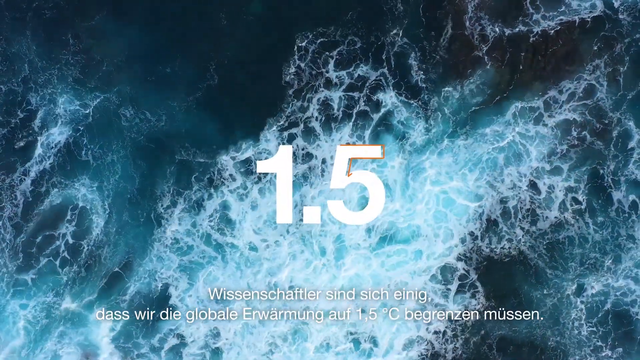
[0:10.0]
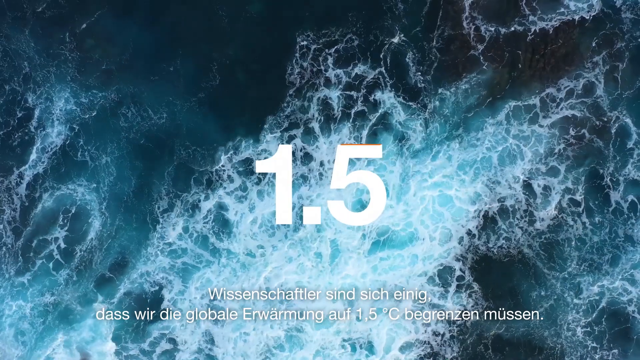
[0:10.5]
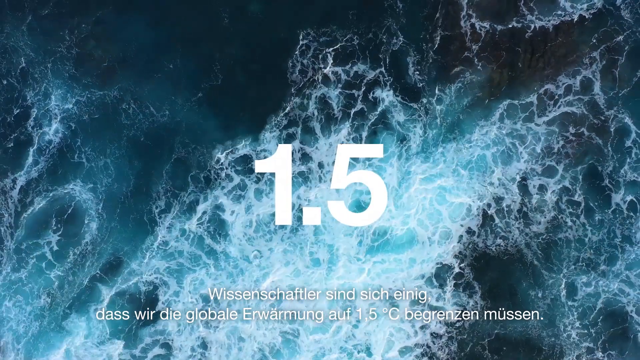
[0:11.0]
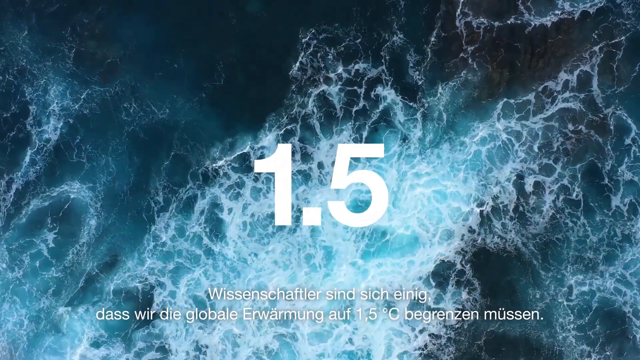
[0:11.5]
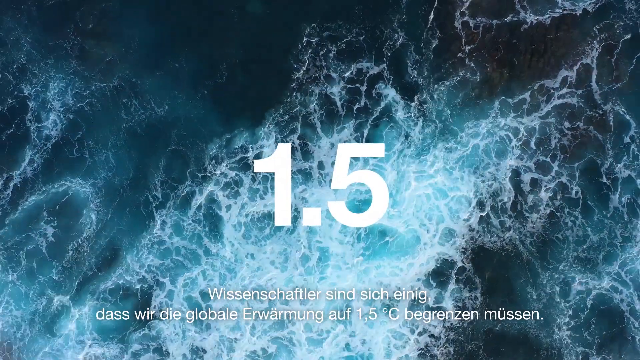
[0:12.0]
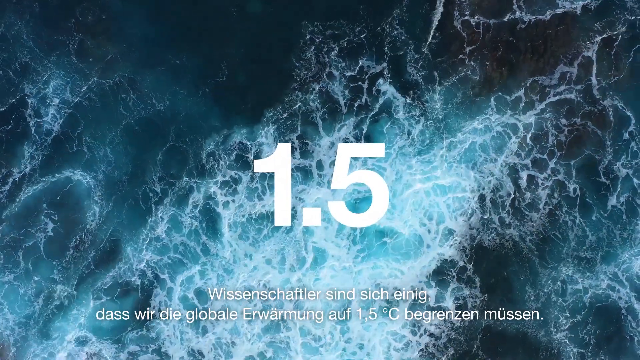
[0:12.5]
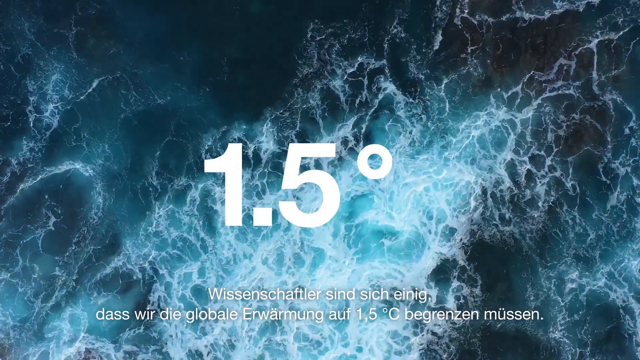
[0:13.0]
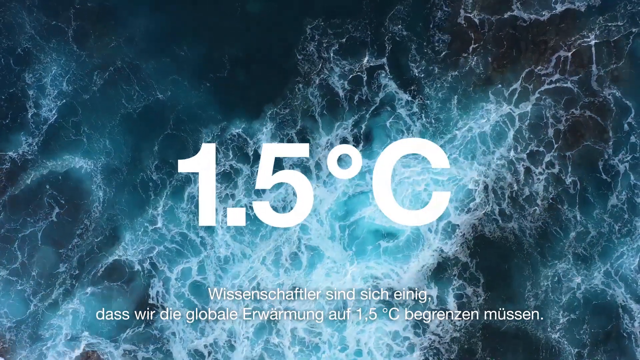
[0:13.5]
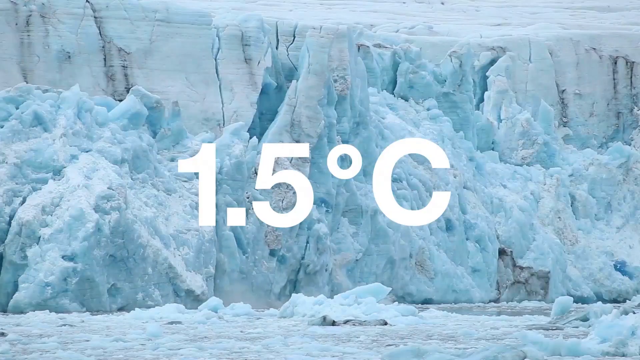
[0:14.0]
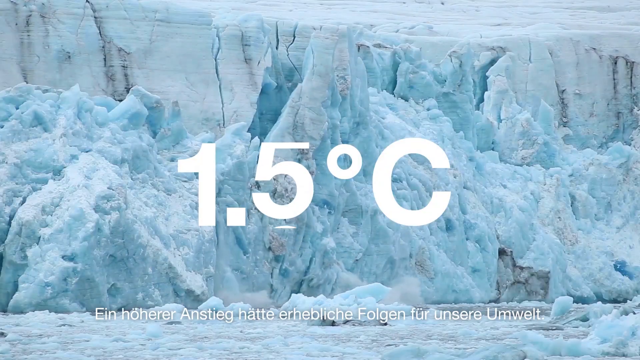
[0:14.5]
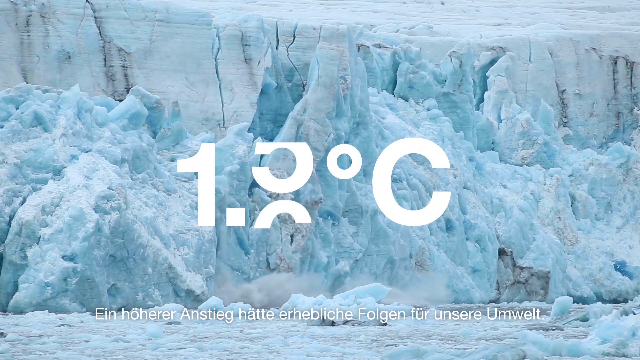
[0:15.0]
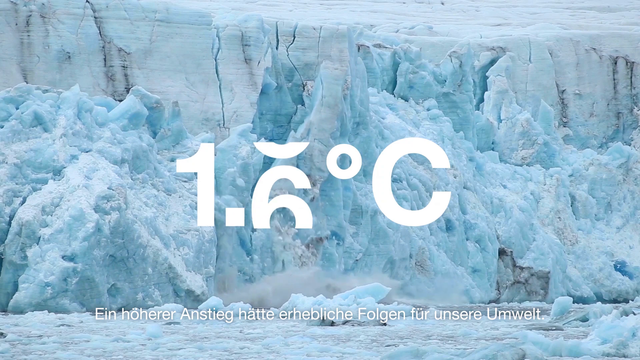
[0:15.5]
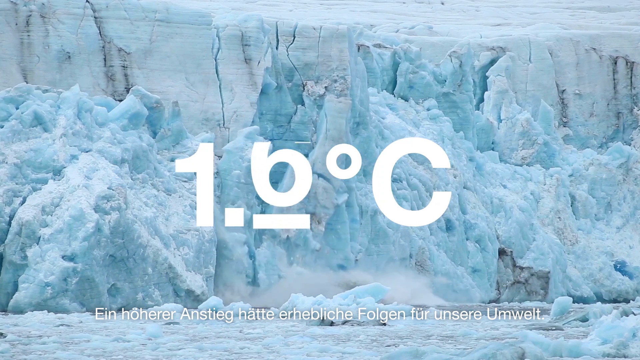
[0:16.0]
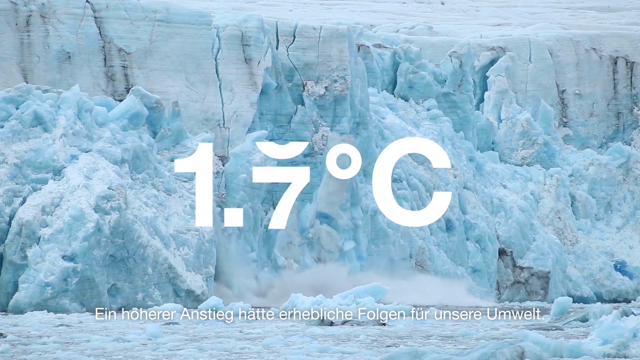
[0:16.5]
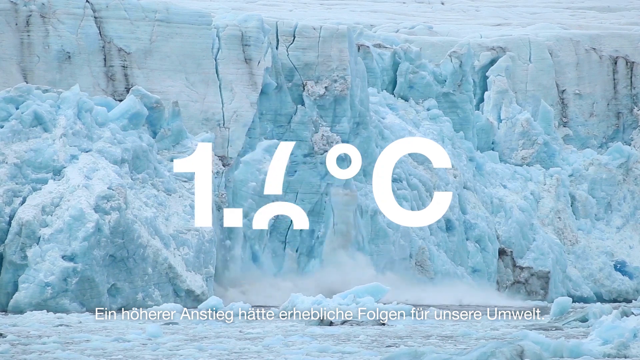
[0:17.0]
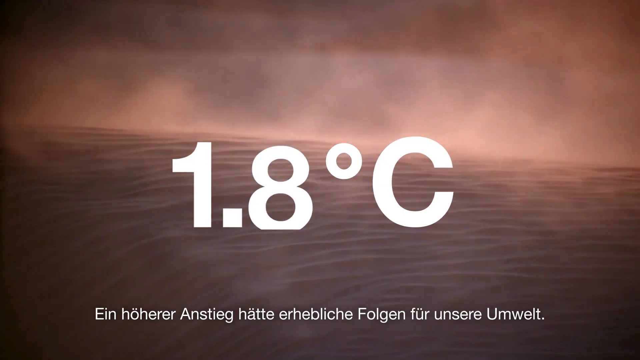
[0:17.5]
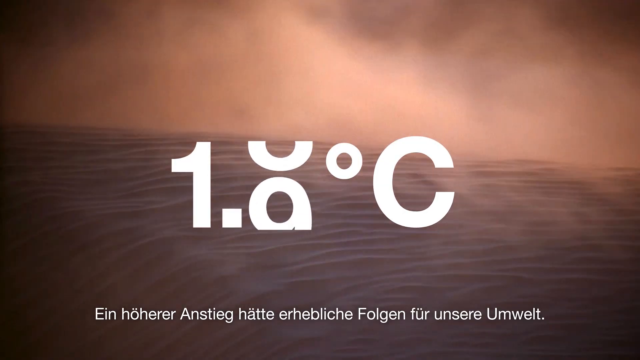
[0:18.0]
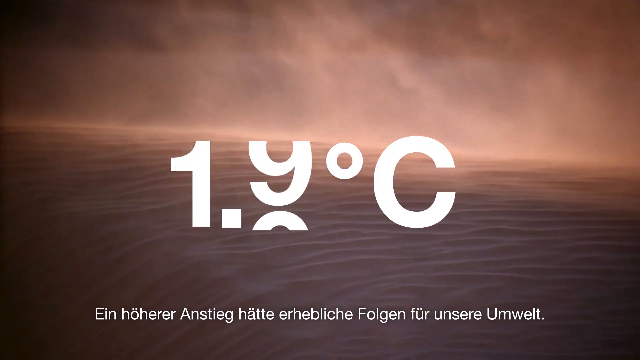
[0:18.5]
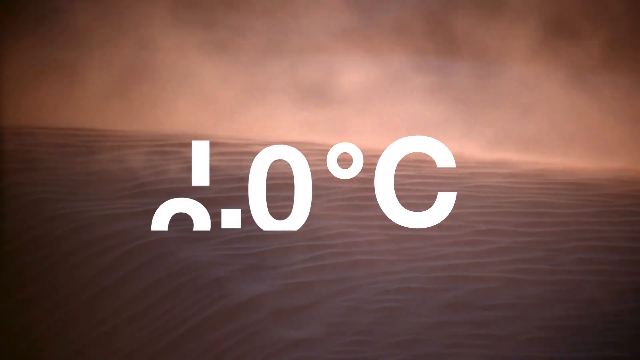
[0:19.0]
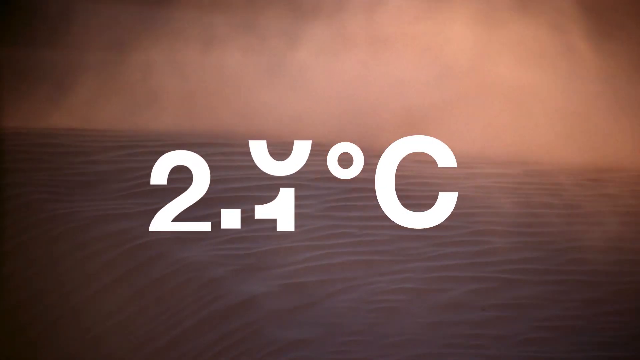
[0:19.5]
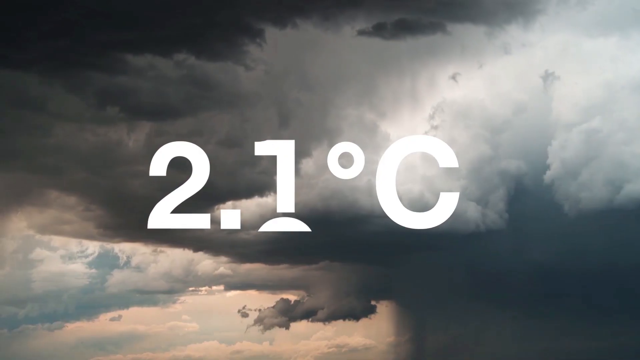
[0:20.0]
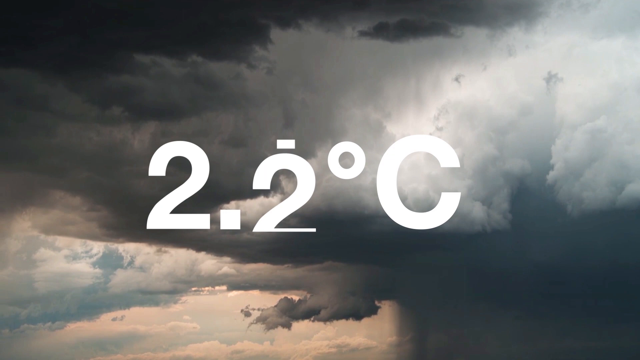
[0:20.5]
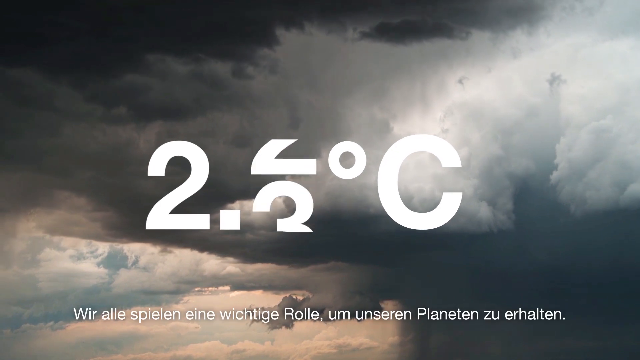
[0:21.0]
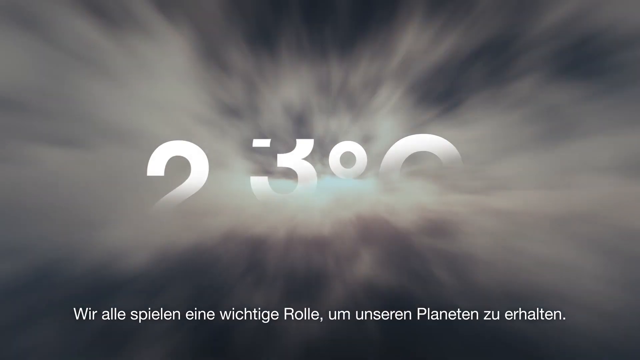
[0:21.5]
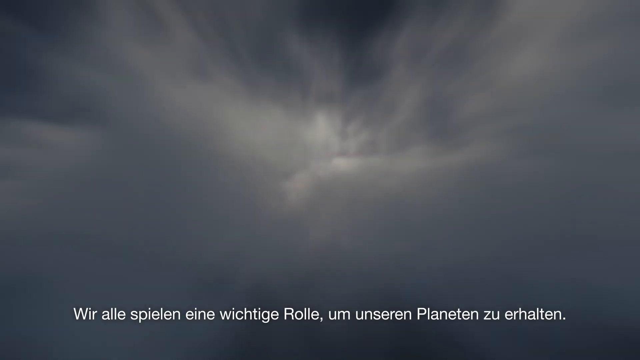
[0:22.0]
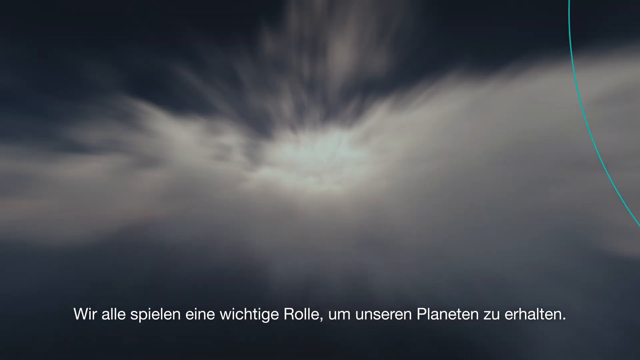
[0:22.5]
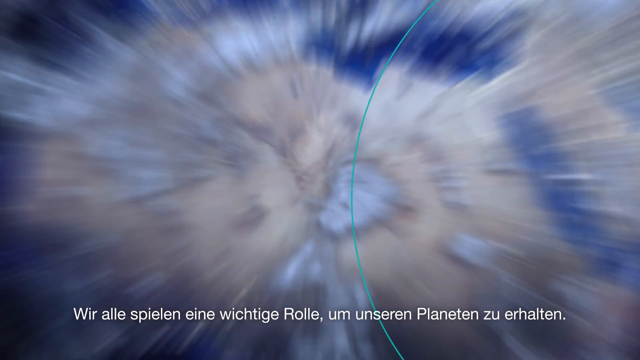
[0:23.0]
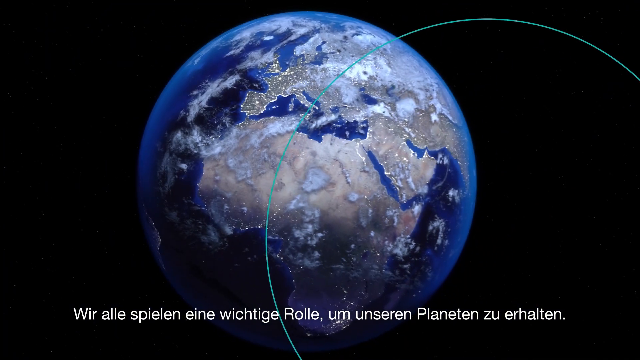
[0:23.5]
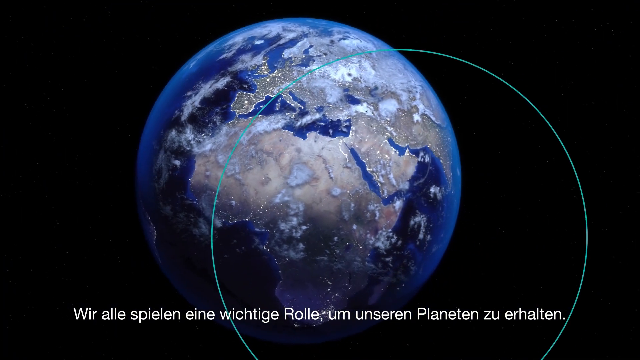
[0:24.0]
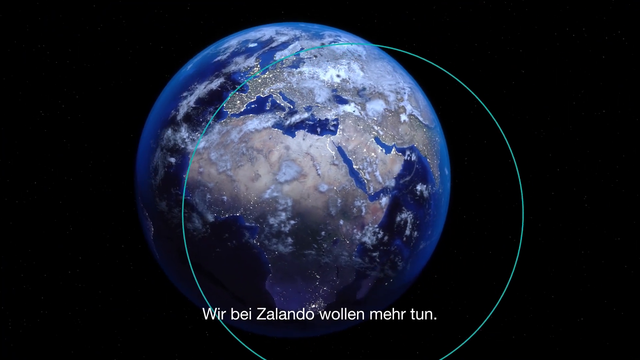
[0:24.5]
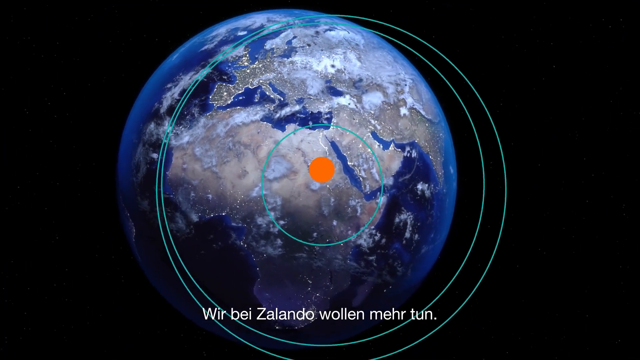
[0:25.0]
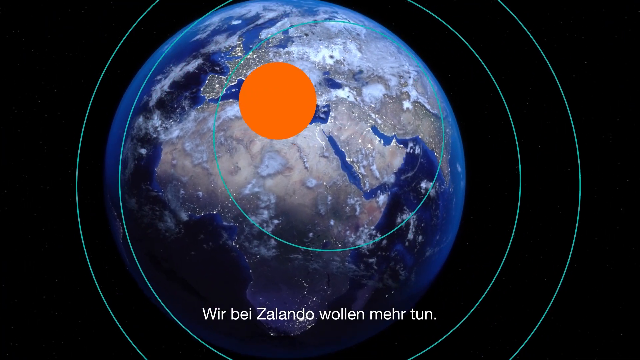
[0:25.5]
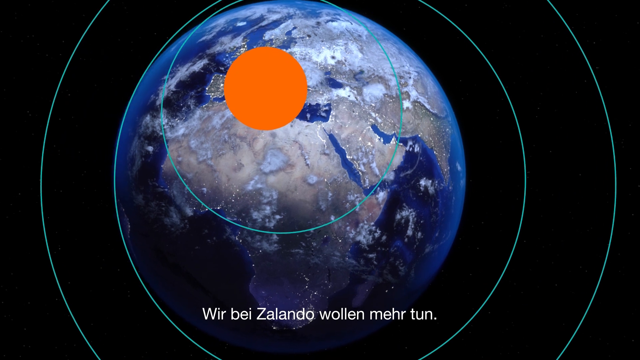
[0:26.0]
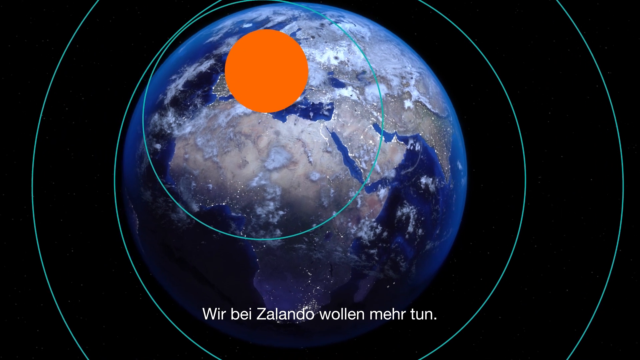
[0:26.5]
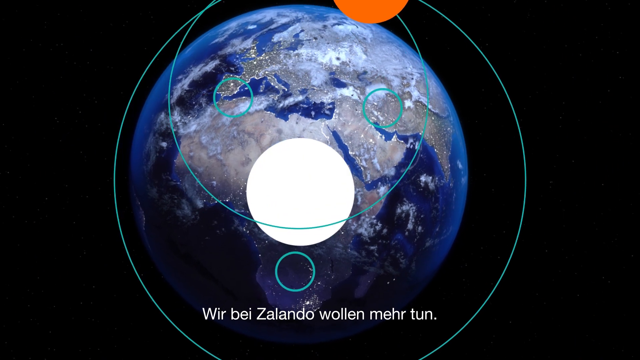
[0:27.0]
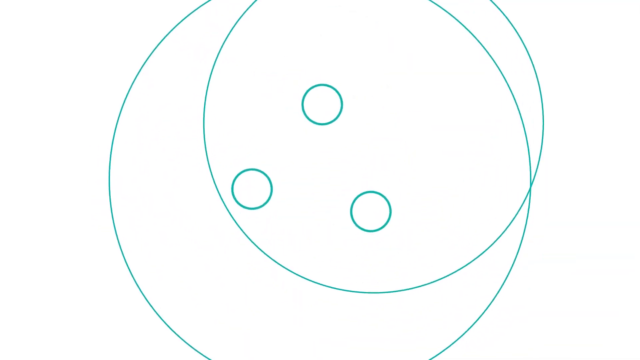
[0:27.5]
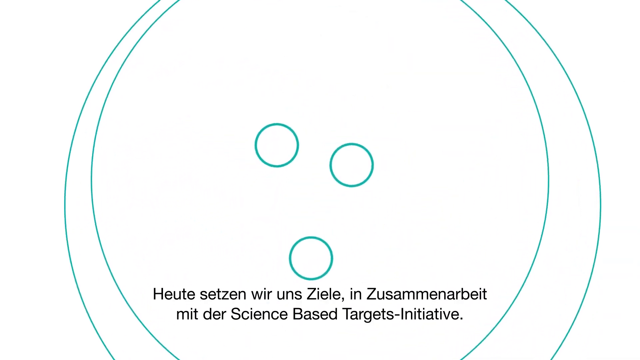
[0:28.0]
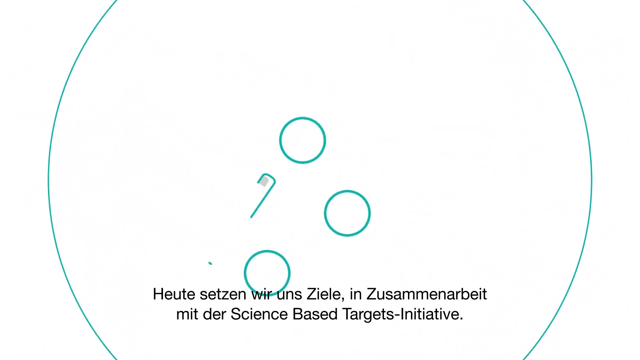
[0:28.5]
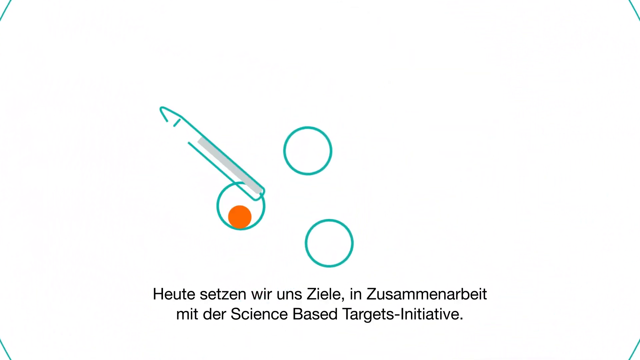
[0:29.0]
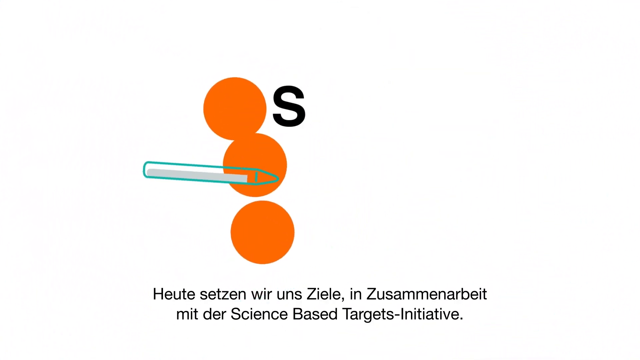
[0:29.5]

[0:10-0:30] The number 1.5 remains on screen with degrees Celsius, then rises to 1.6, 1.7, 1.8, 1.9, 2.0 and 2.1, potentially representing global warming on Earth. A sort of infographic then zooms out to the globe, showing the Earth itself, before a sort of transition to a white screen with three orange circles on it, with a sort of pen-looking object visible during the transition.